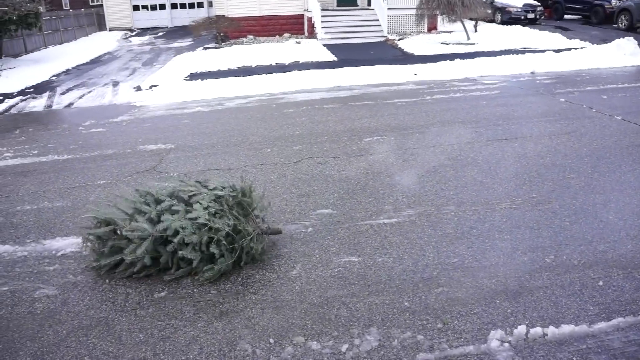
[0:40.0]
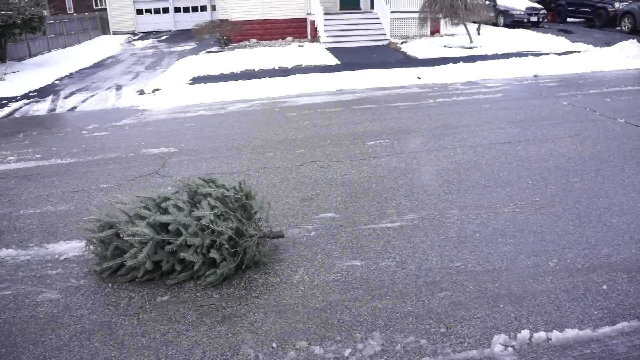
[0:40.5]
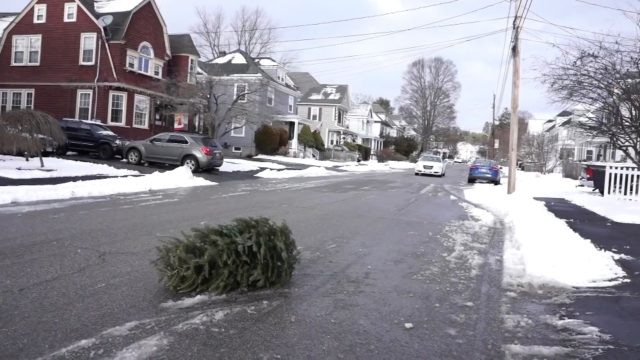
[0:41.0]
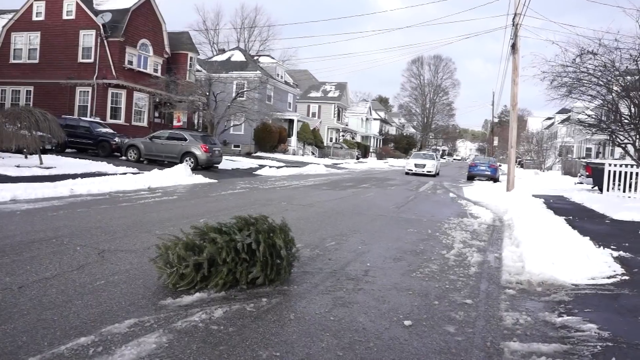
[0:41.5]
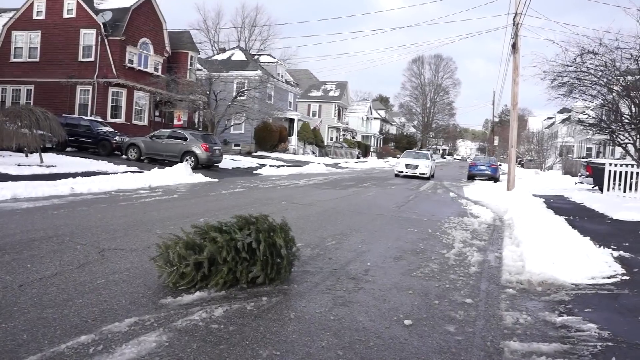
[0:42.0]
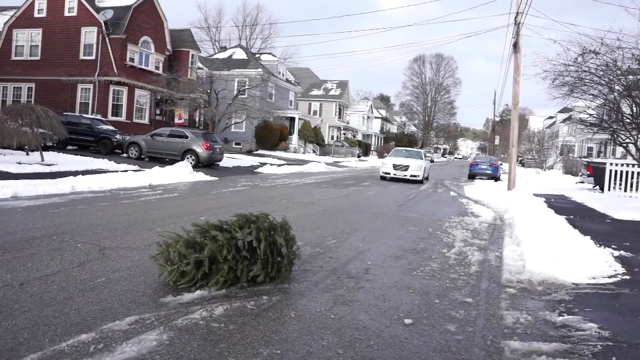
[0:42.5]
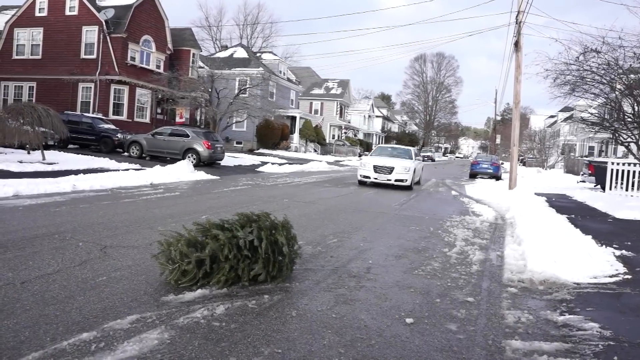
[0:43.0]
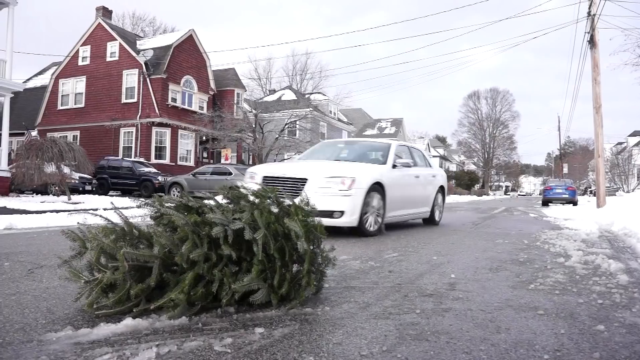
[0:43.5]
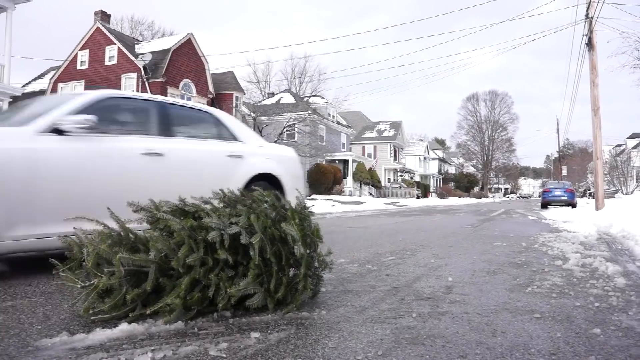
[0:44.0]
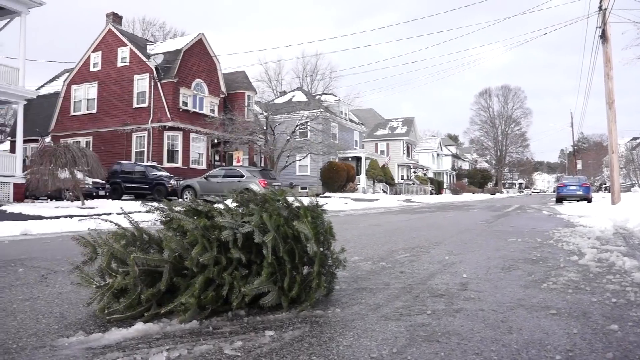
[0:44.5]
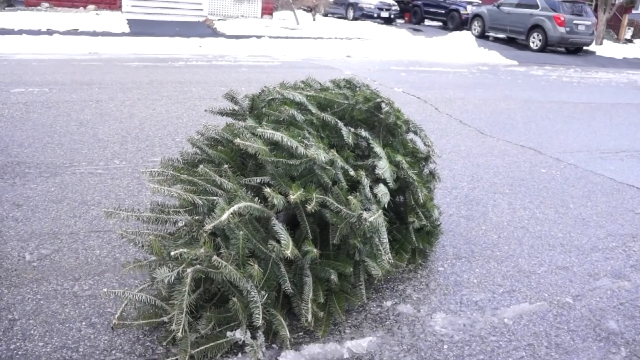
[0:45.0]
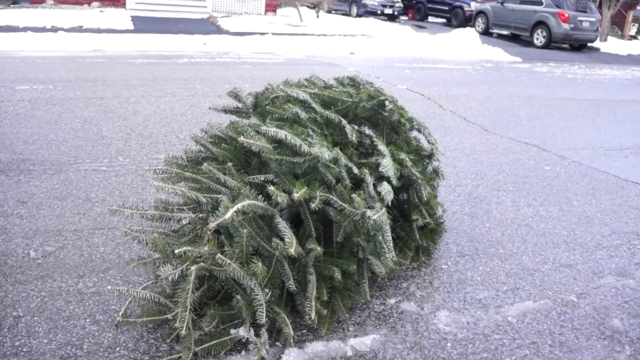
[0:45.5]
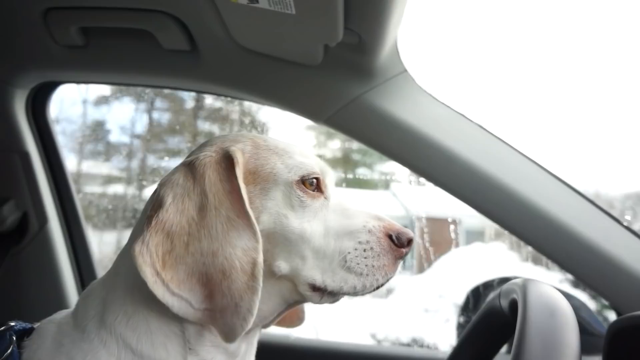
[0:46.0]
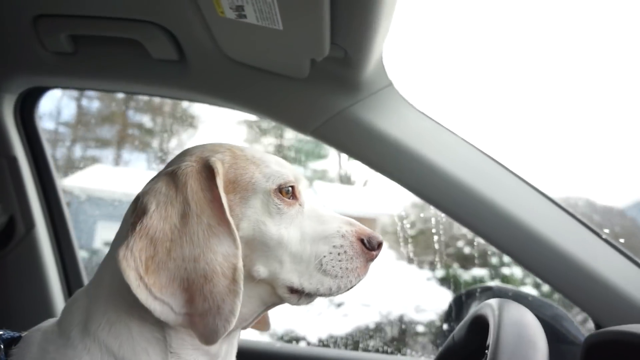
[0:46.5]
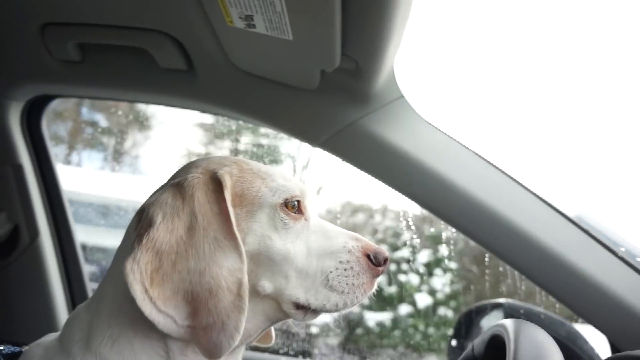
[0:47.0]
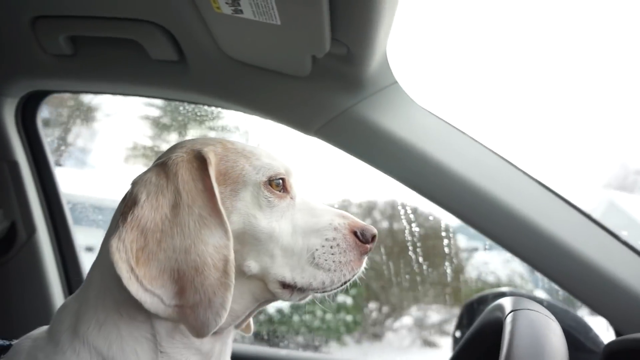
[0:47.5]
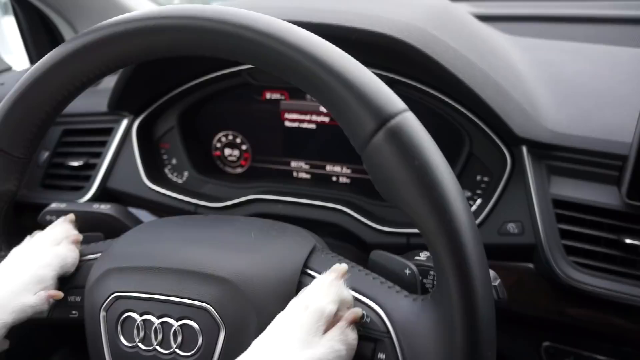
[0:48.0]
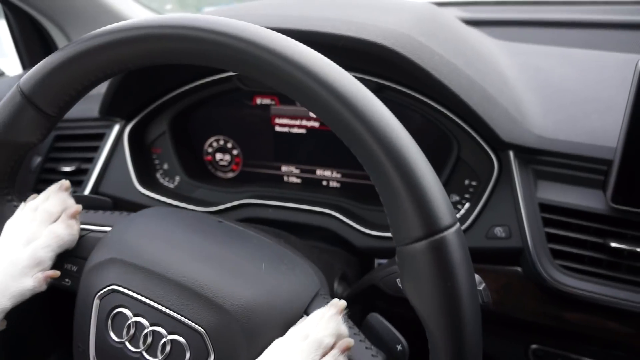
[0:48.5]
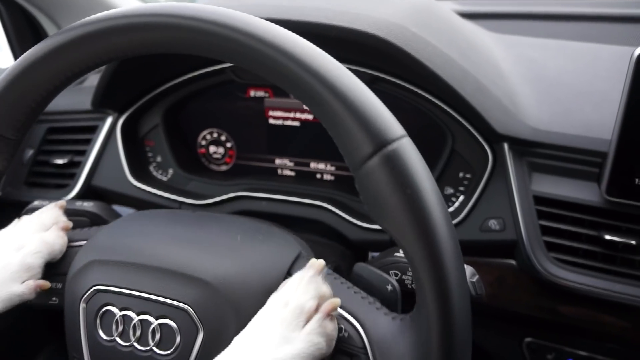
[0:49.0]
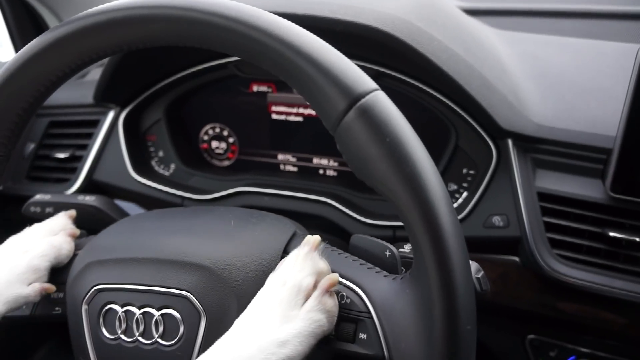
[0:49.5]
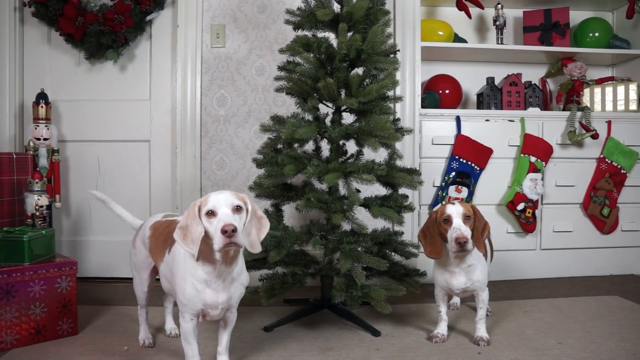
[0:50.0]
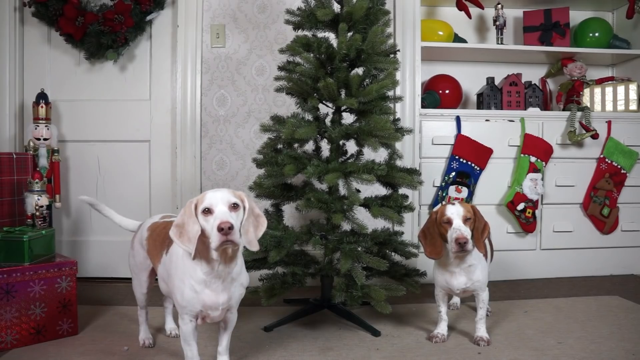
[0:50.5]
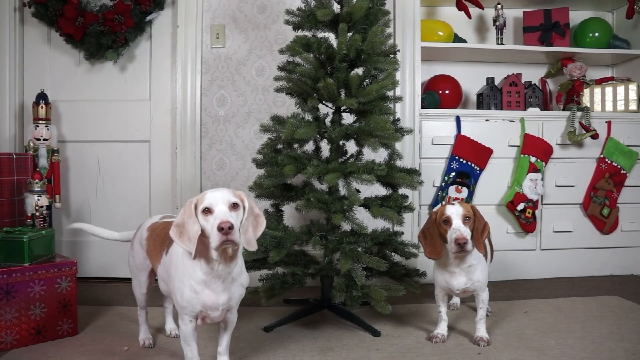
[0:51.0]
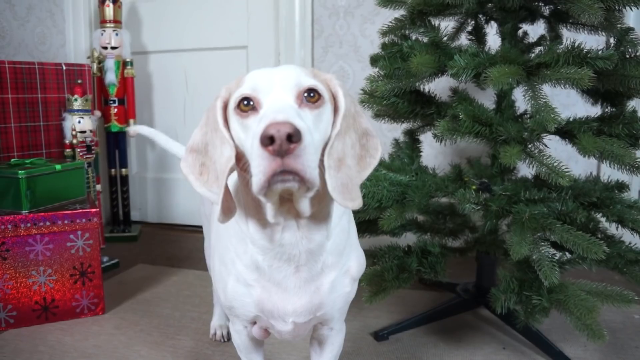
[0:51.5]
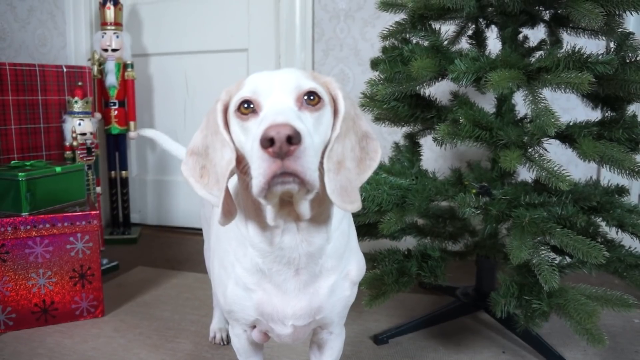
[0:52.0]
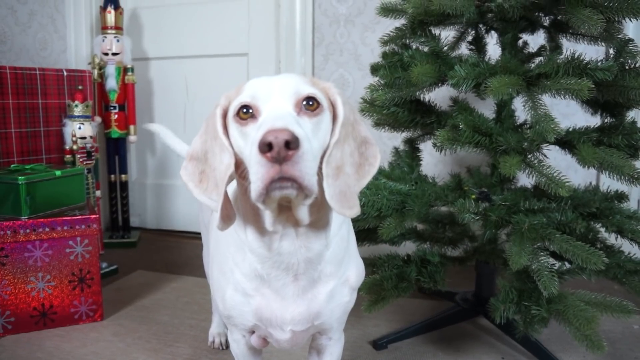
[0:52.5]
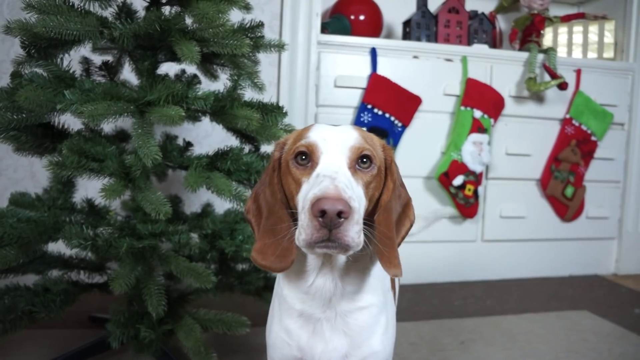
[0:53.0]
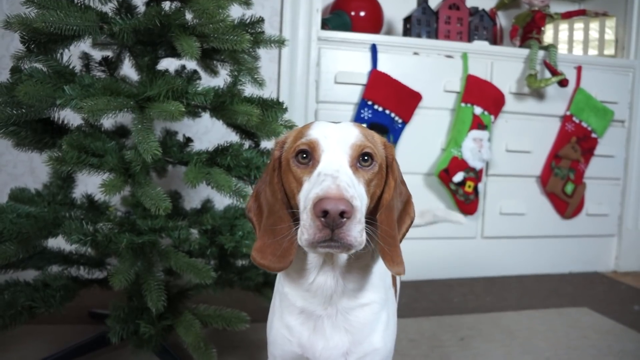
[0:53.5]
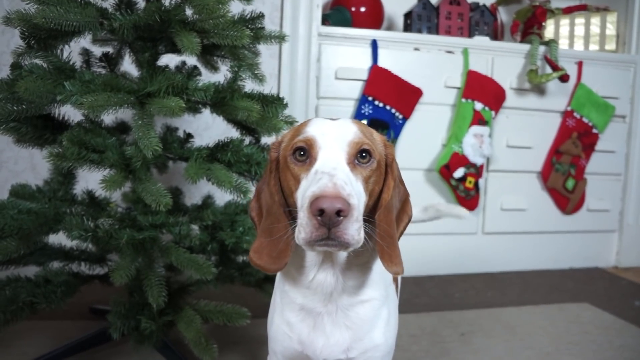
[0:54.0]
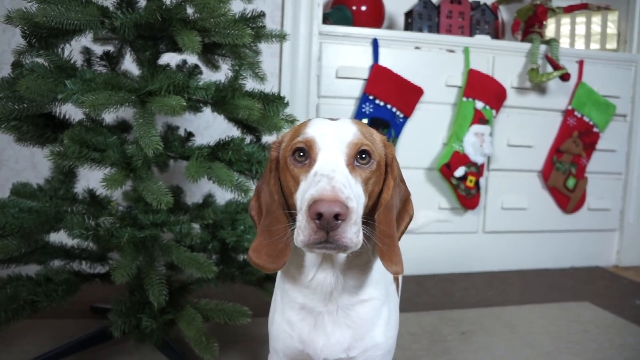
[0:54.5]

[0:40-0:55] The tree is left in the street, and a white car passes by it. The dog drives again in the Audi with both paws on the steering wheel. Back at the house, two dogs are sitting inside and standing in front of a tree. On the right side of the house there are three stockings, and there are gifts on the left side. One dog is white, and the other is white with brown on top around its head, like a mask. The white dog, on the left side, has a white spot on its back. The dogs are putting tinsel on the tree.